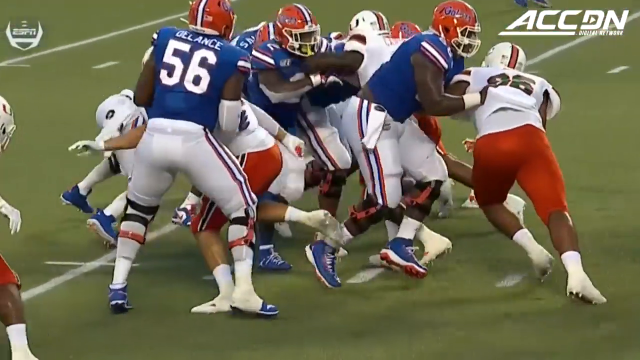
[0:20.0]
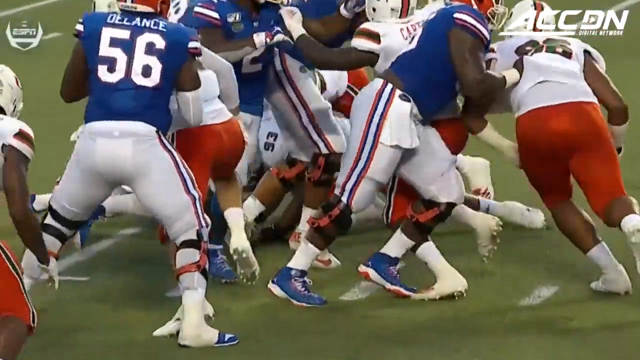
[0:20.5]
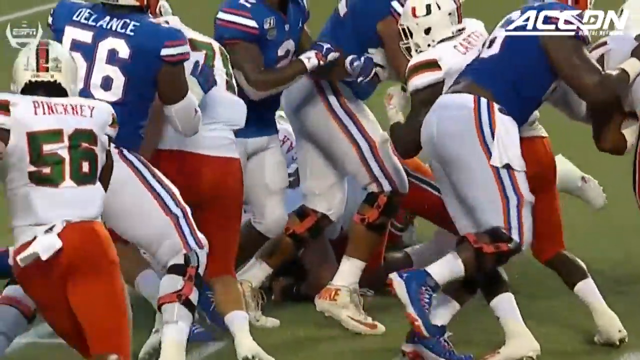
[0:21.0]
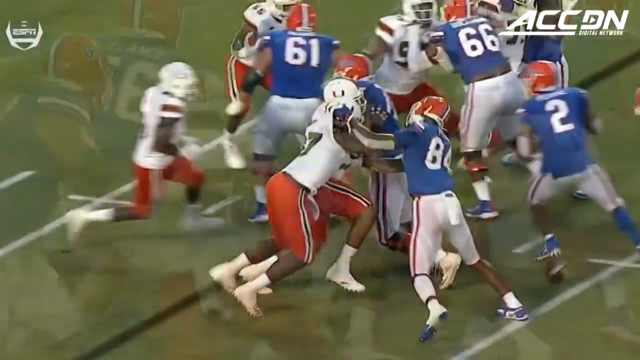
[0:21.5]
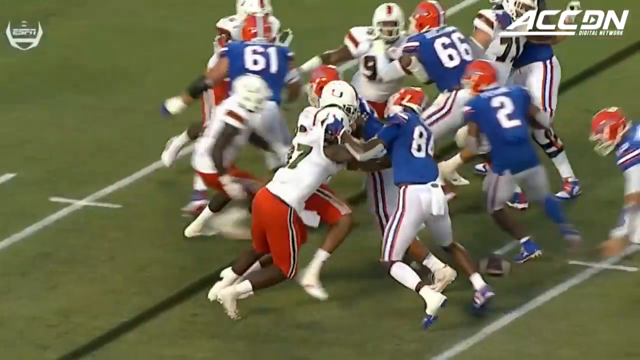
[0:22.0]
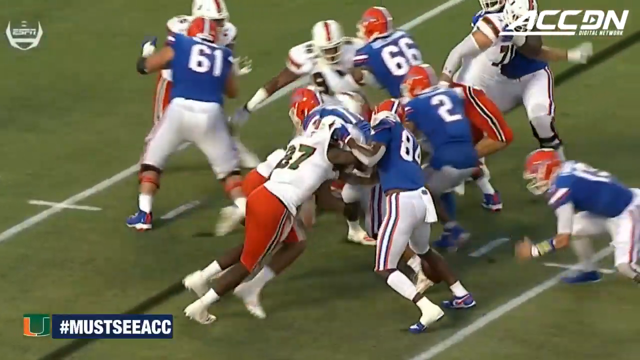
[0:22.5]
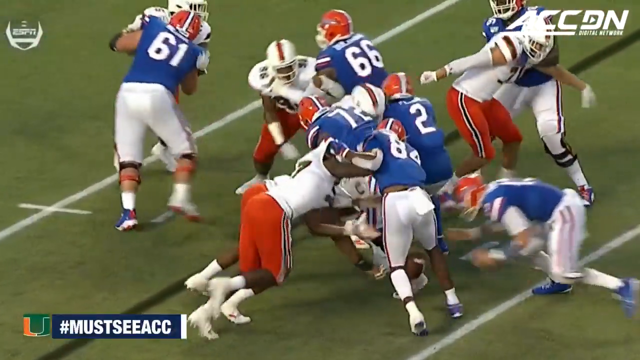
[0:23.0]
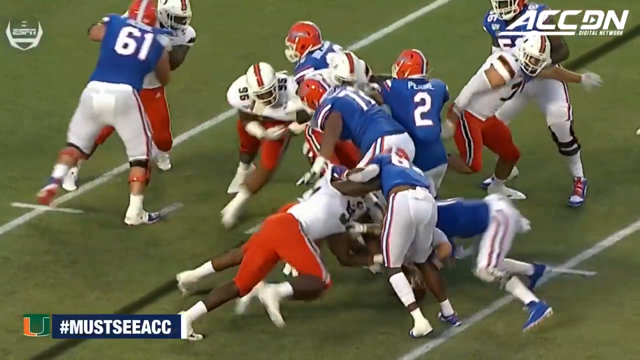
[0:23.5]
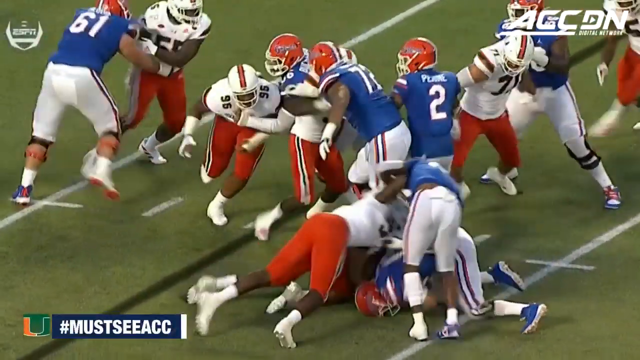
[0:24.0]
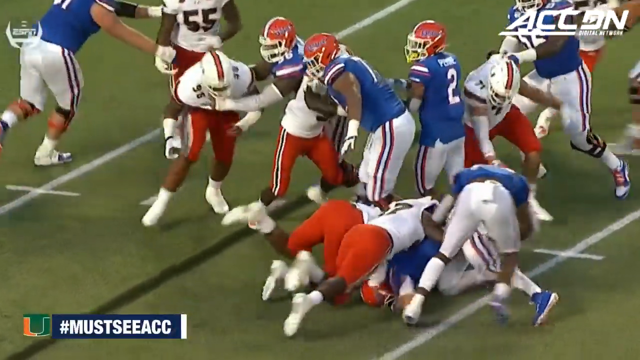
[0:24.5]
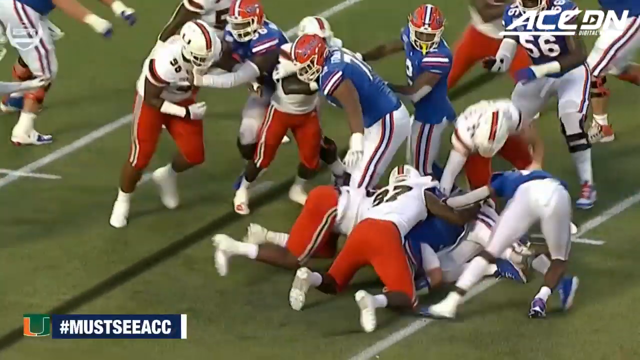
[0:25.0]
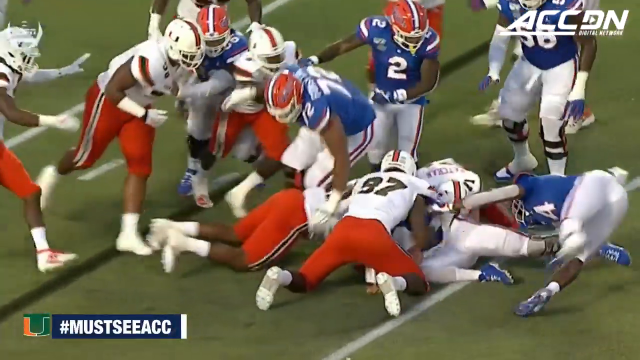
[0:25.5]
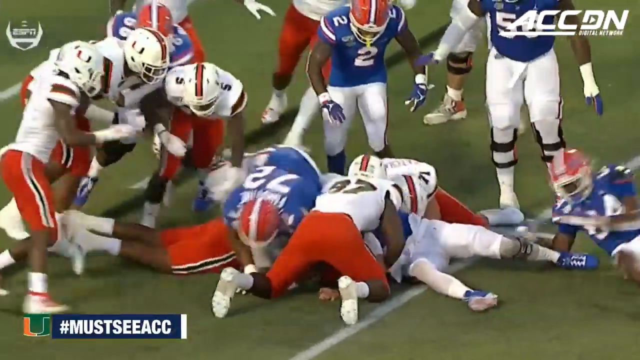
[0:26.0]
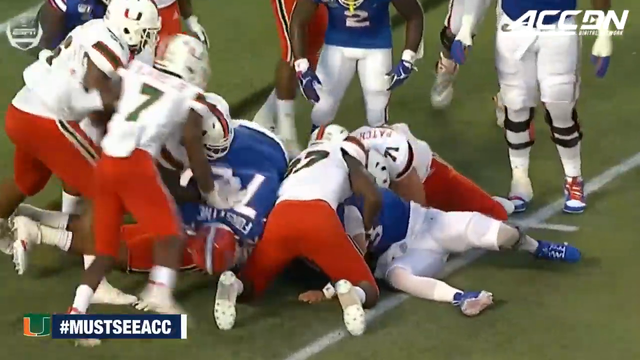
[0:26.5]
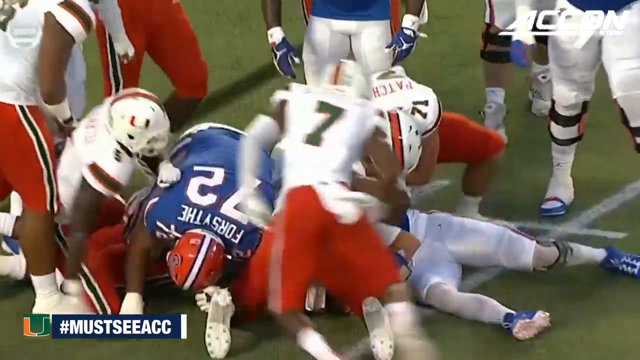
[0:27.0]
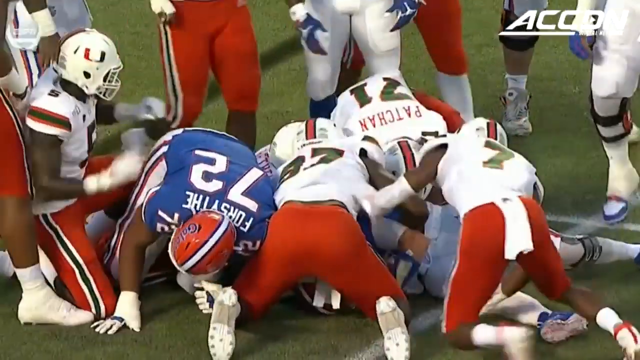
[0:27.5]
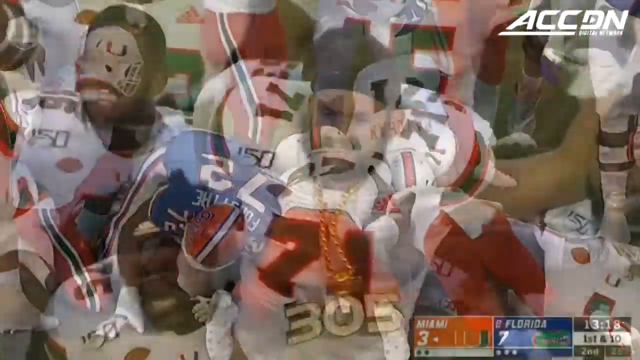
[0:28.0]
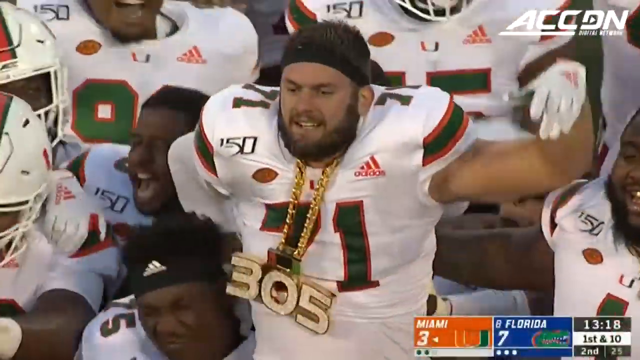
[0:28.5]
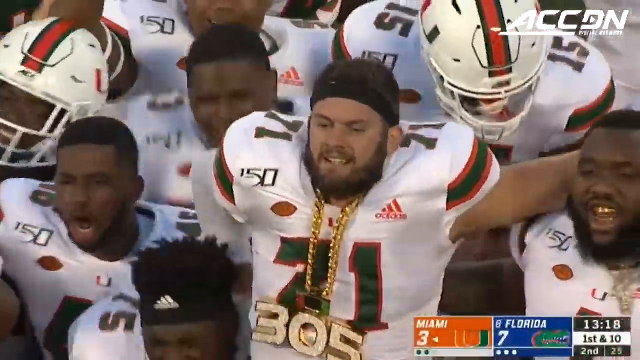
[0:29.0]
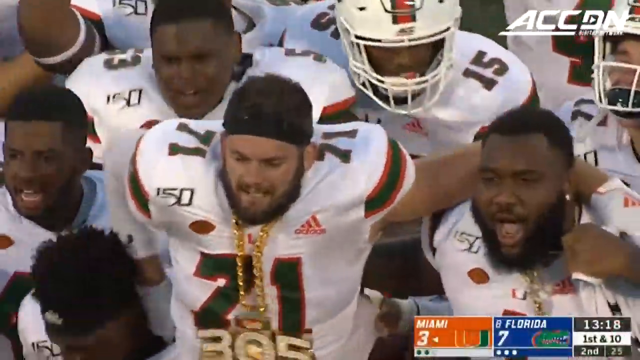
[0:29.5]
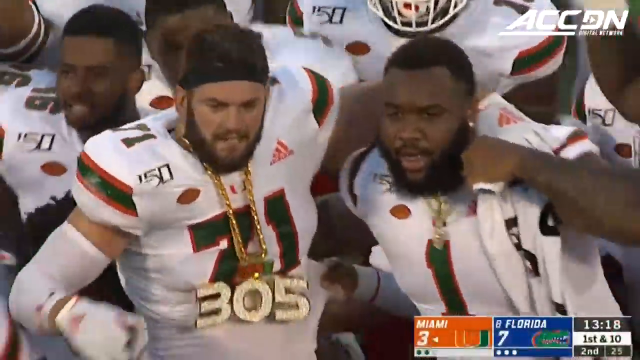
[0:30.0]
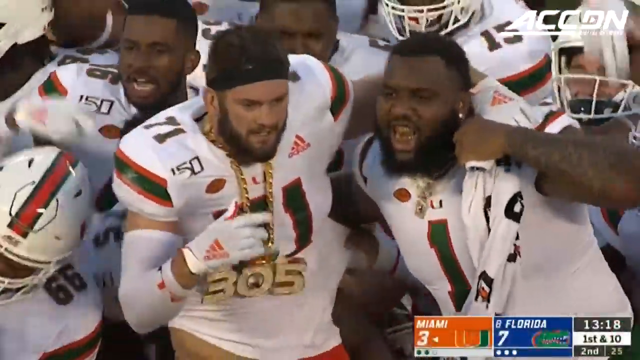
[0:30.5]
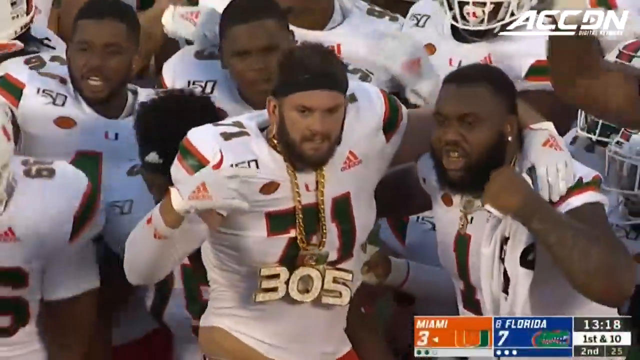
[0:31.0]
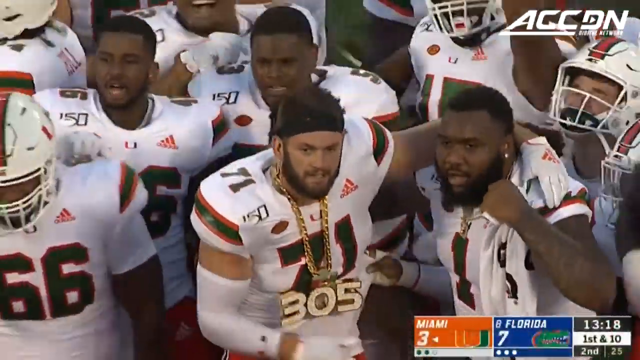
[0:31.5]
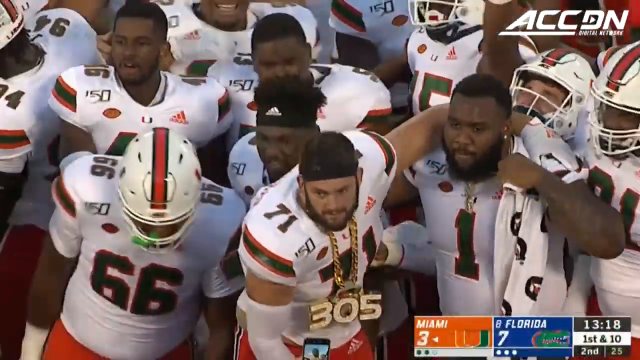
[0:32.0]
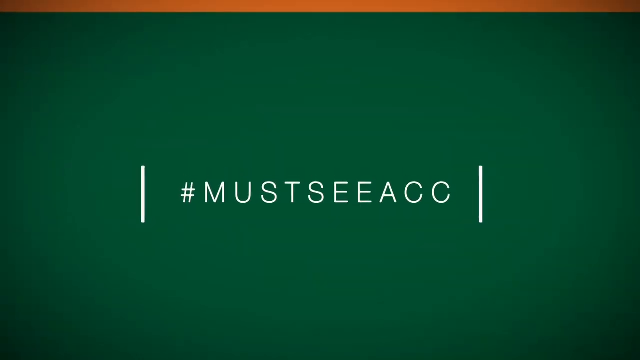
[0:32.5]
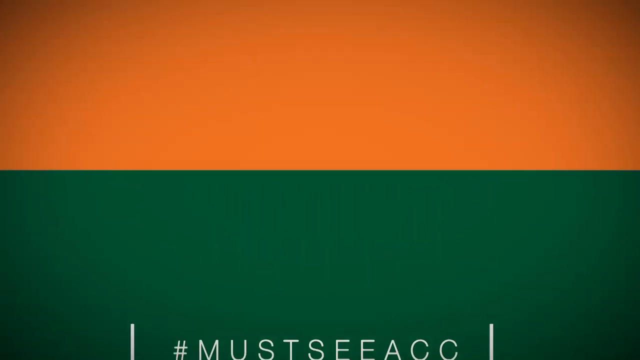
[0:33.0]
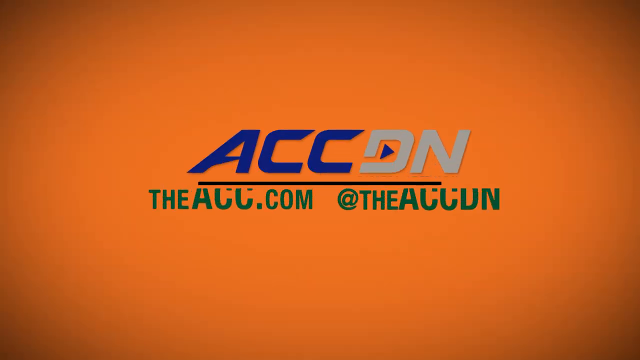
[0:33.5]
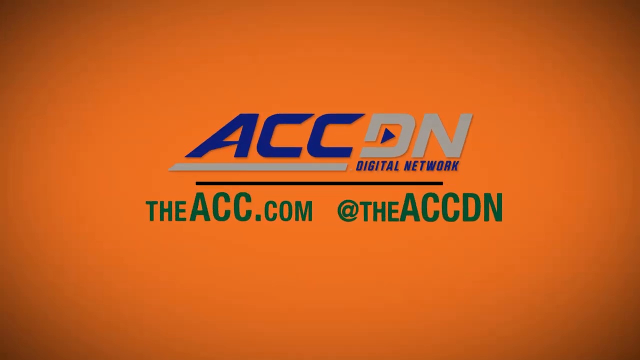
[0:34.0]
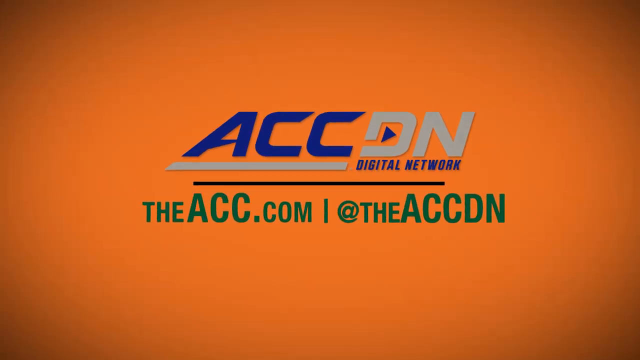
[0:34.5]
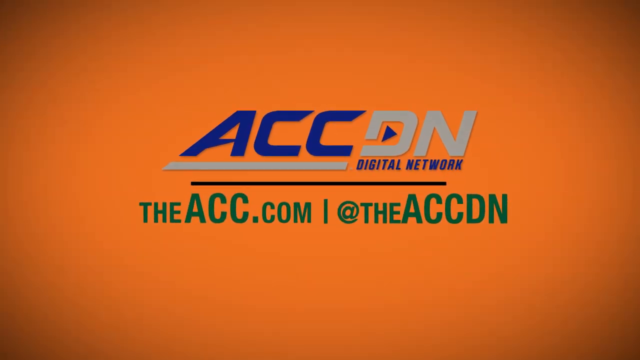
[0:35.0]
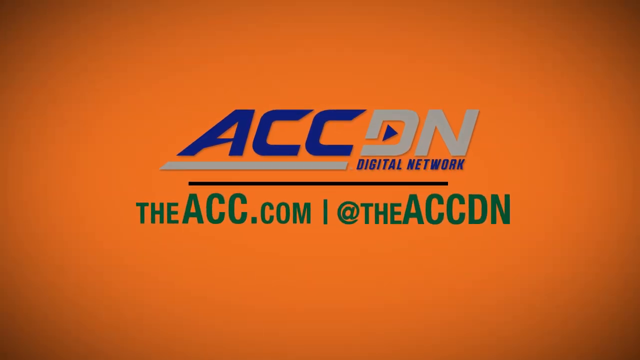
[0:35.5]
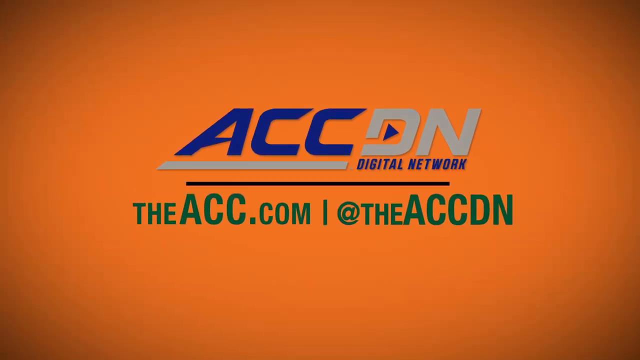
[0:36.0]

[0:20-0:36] In slow motion the play is a little clearer, though where the football is remains unclear. A bunch of players in white are kind of being overtaken by players in blue, and they are all kind of crashing into each other. Each player kind of has a counterpart from the other team to fight against; for example, the player in blue jersey 61 is kind of hugging one player in white, trying to keep him from going over to the bigger group, but that player ends up kind of pushing him away anyway. A bunch of people are on the ground, and even though they are kind of on the ground, others are still trying to keep them down. Then a celebration photo of the team in white appears. The video is from ACC Digital Network.